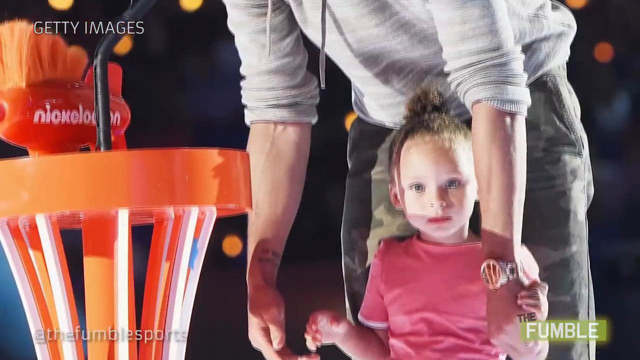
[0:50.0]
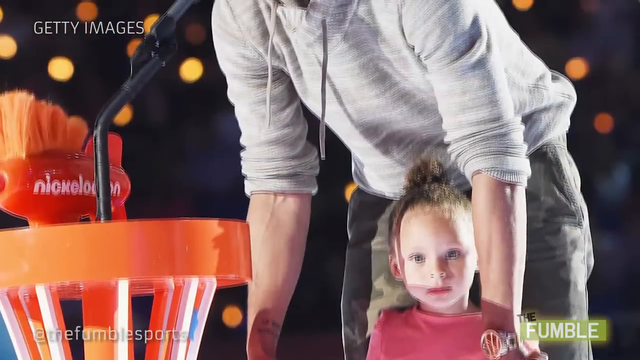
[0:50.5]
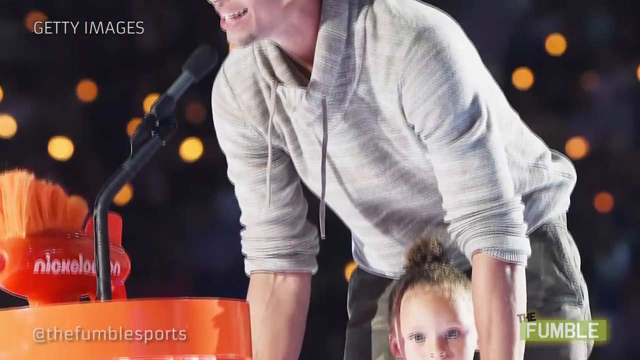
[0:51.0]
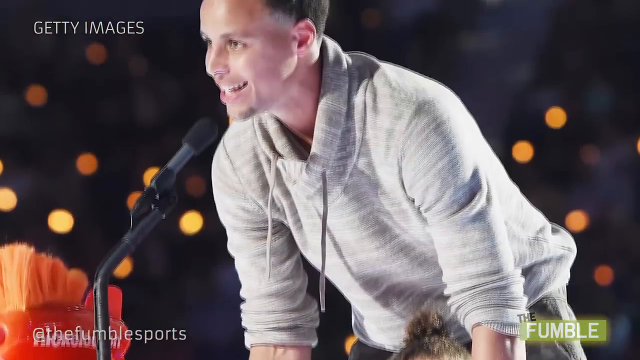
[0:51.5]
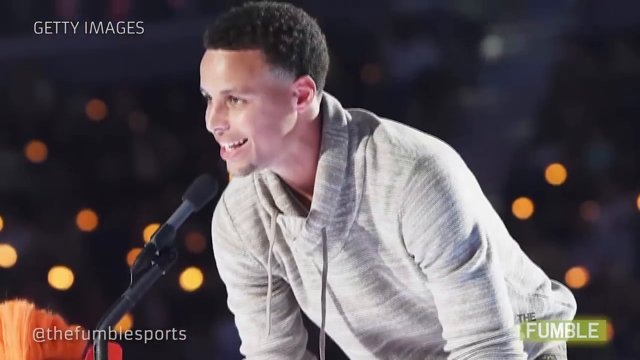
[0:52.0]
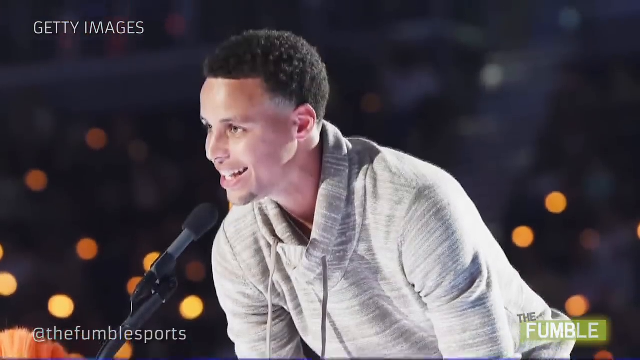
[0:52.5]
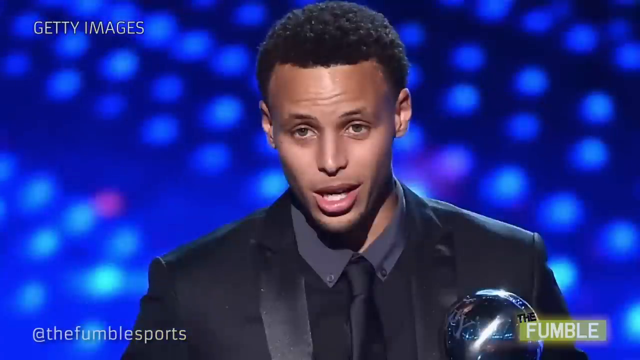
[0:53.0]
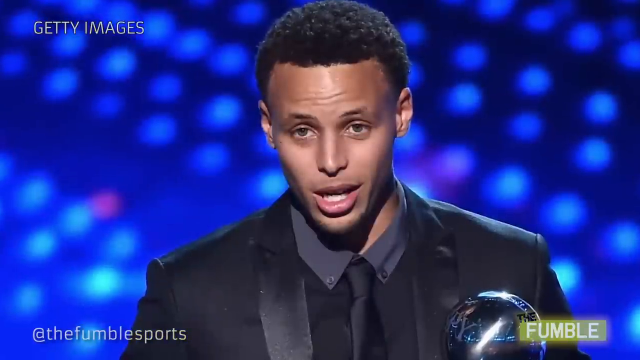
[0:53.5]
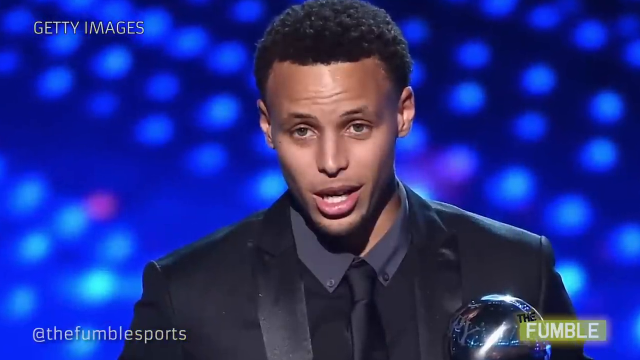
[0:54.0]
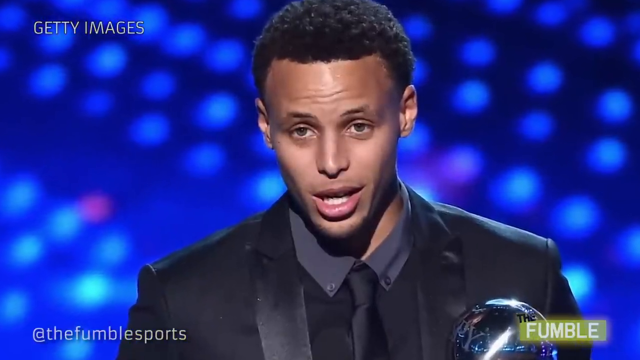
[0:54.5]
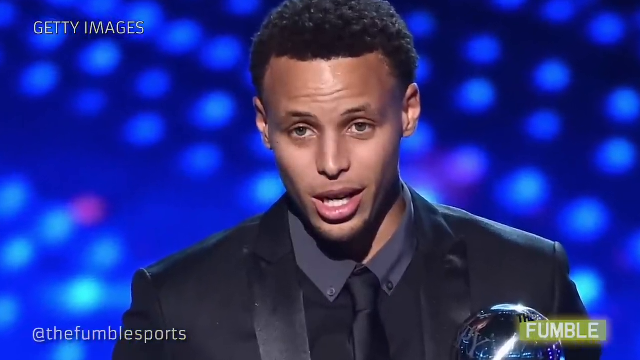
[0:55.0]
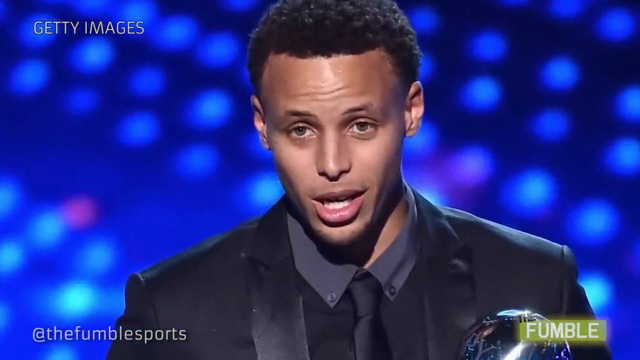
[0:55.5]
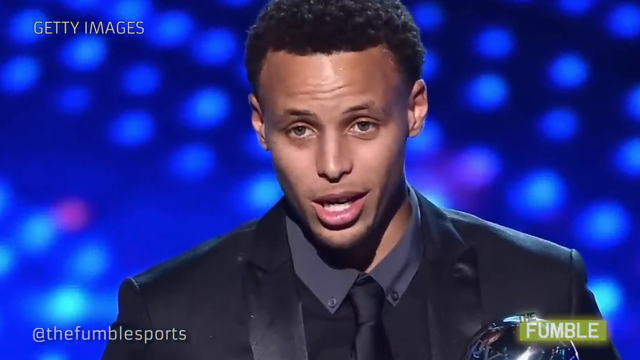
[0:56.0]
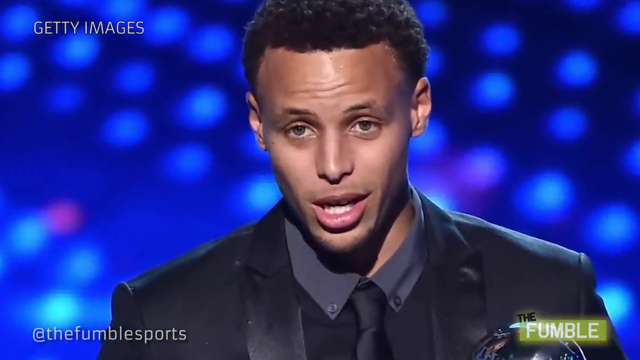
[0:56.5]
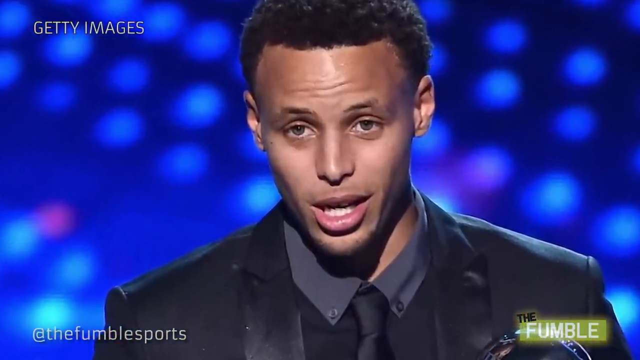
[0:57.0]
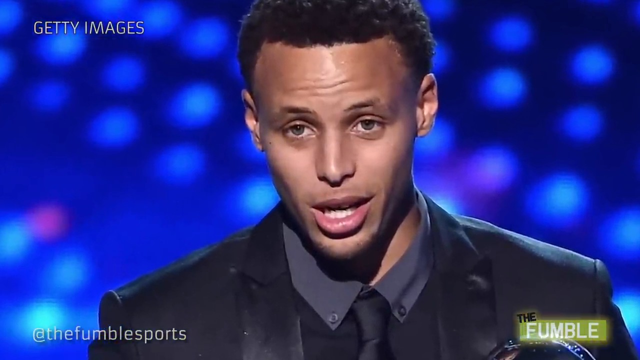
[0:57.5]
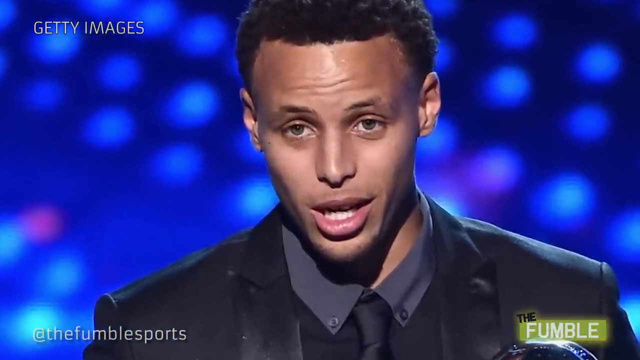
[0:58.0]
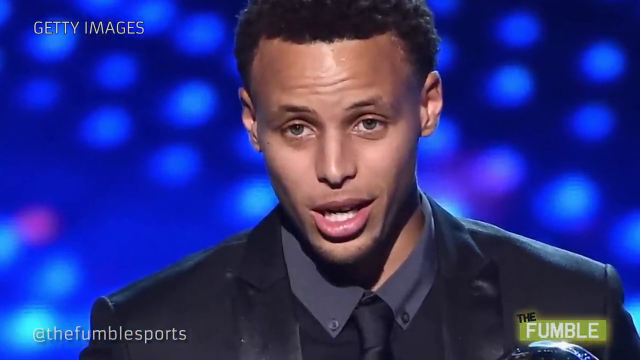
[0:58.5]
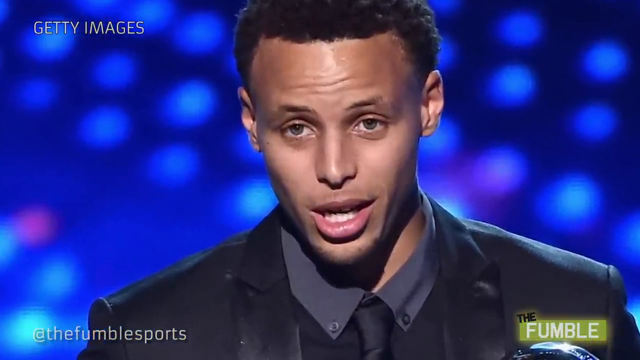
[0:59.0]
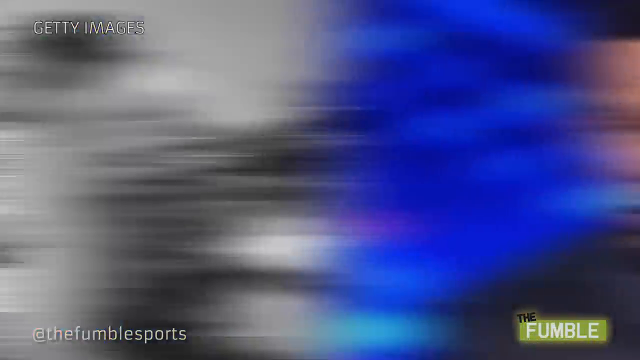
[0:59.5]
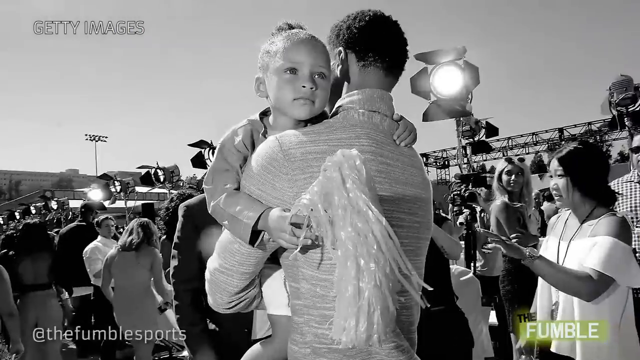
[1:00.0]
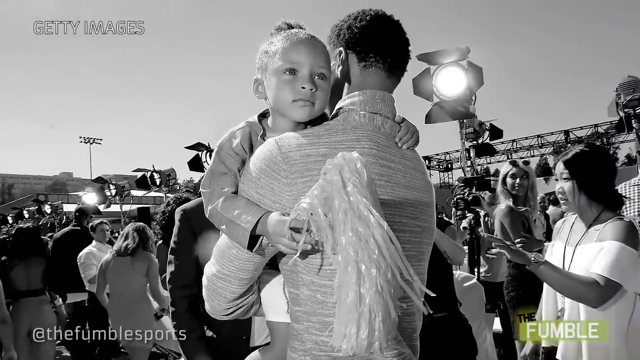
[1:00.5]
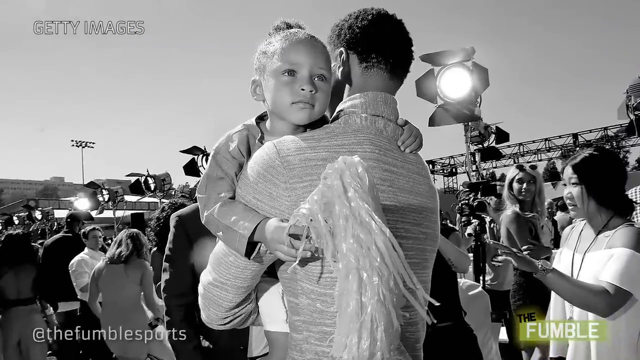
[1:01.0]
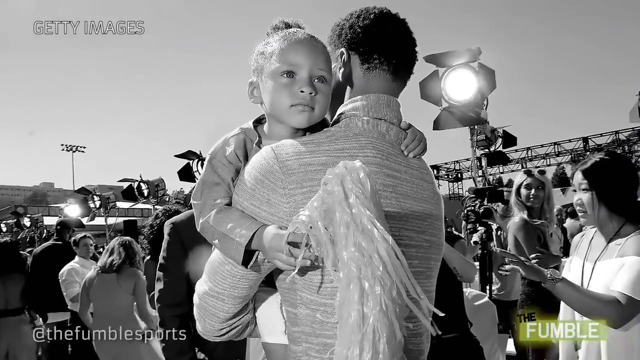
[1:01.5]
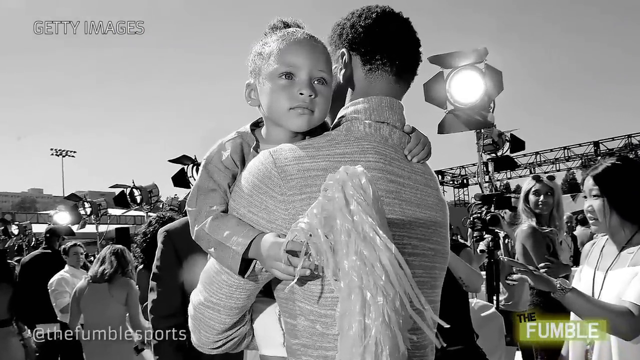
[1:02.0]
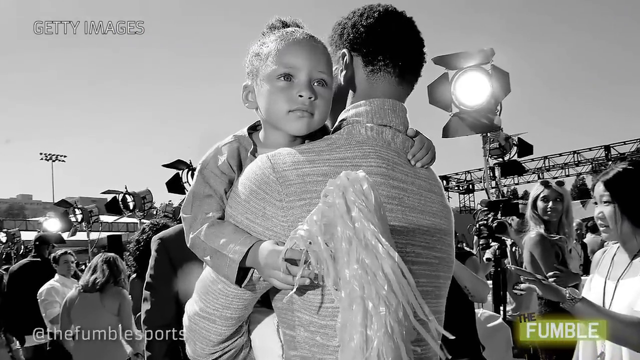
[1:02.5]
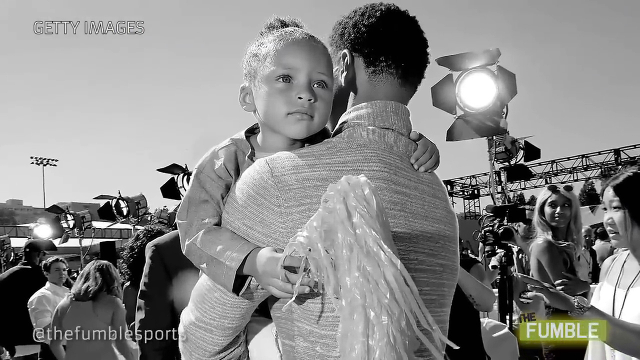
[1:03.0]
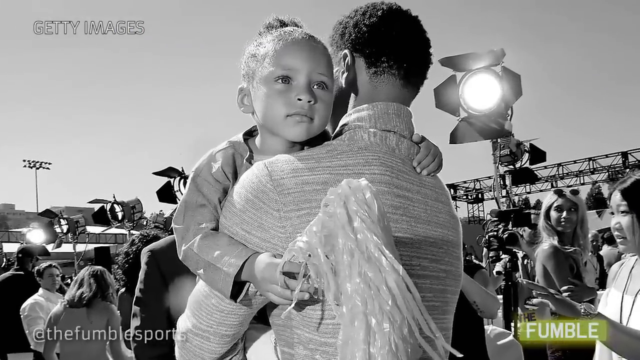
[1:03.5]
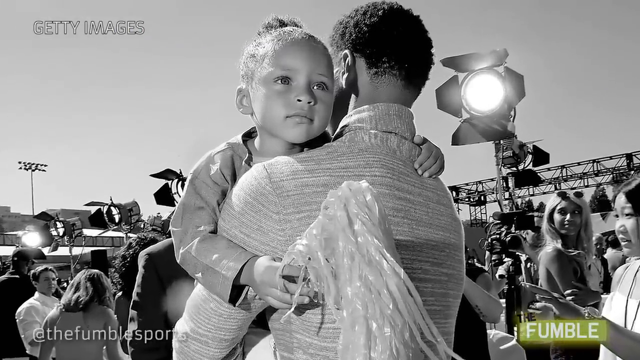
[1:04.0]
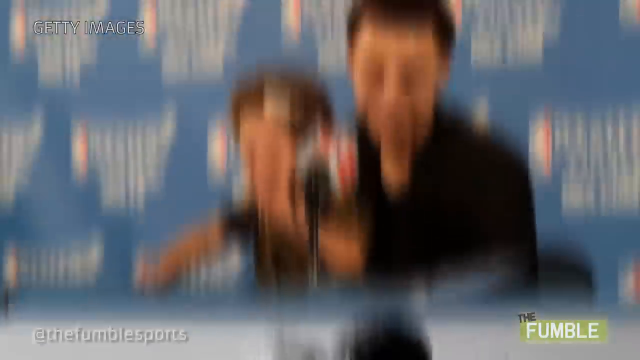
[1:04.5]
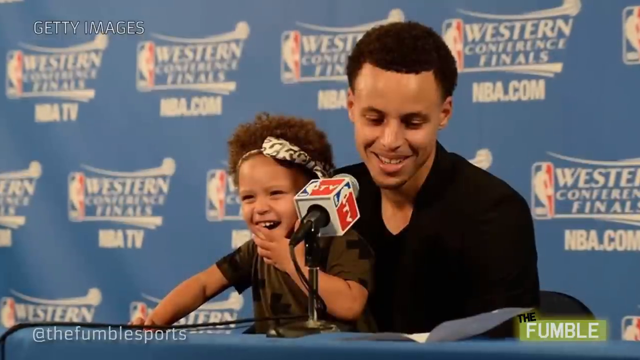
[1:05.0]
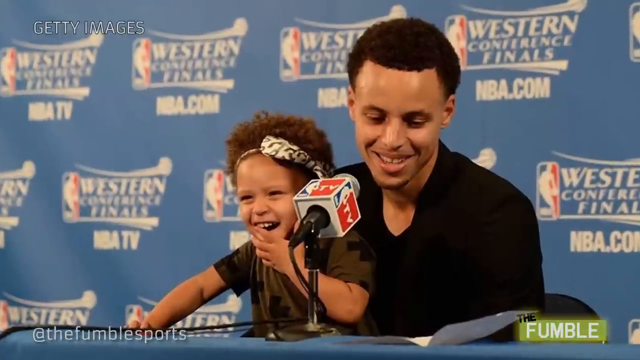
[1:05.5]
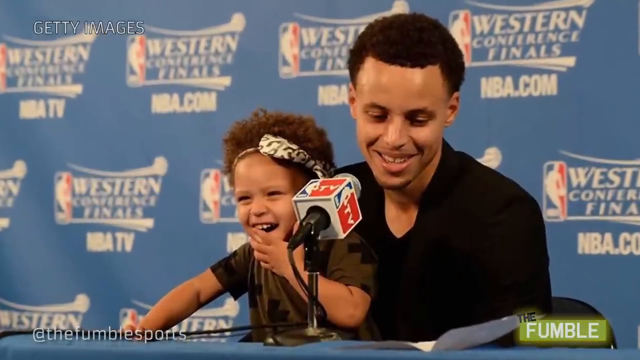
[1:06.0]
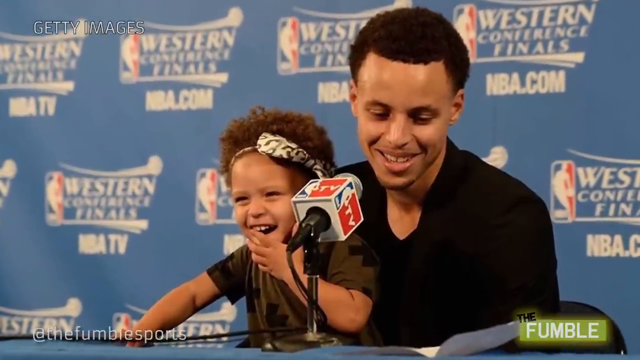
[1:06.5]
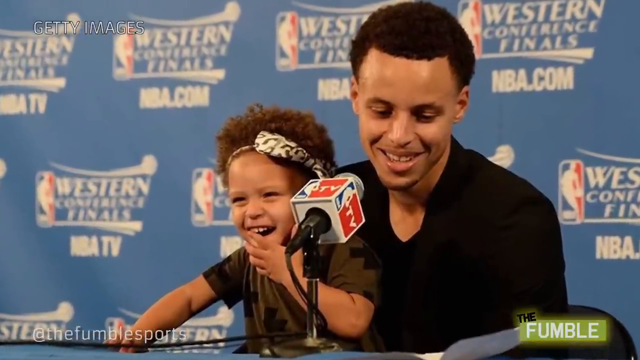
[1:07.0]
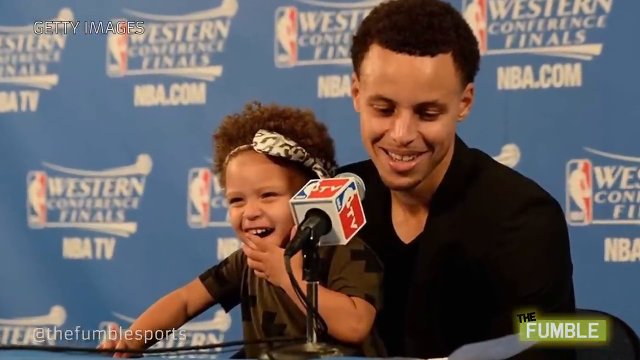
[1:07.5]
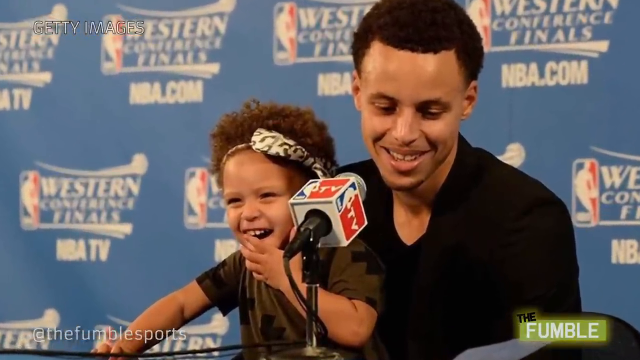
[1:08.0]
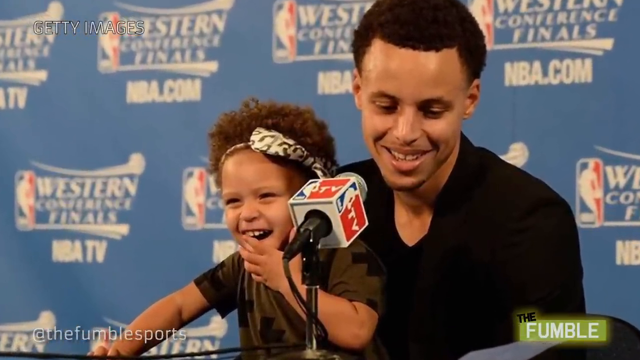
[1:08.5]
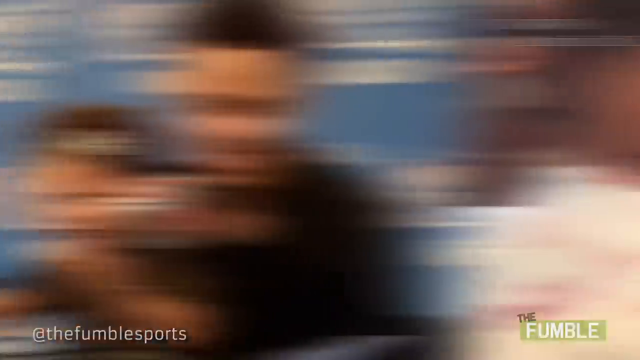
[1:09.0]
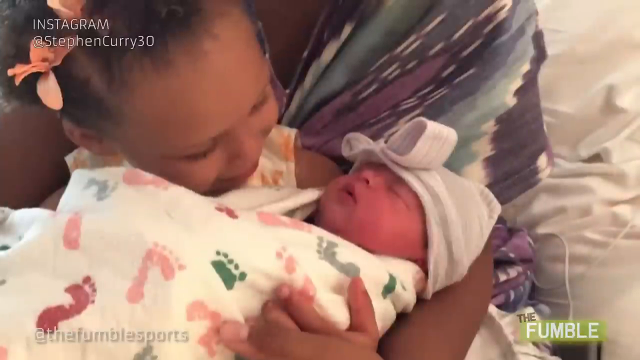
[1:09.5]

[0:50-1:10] A still image shows a very tall man bent over with a little girl, talking into a microphone. The top left corner of the image shows the words "Getty Images." The microphone is located at a podium that has an orange dirigible saying "Nickelodeon," so the man is apparently speaking after probably just accepting some type of award. A different photo shows him talking into a microphone against a blue background, looking more serious. The camera pans in on his face for a much closer shot. Another still photo follows, this one black and white and outdoors, showing only the back of the man. He is holding his little girl and walking outside a large crowd of people, with camera spotlights everywhere. The little girl grasps her dad and his shoulder with her left hand, holds a white streamer in her right hand, and looks off into the distance.